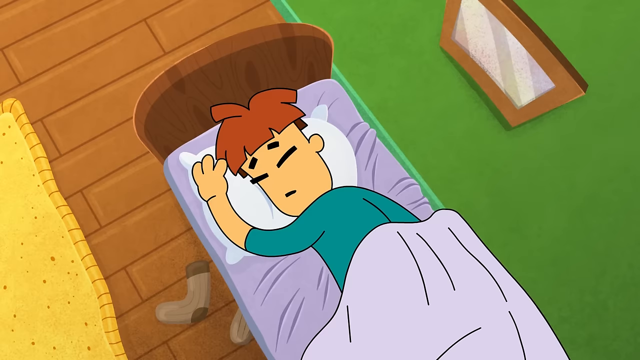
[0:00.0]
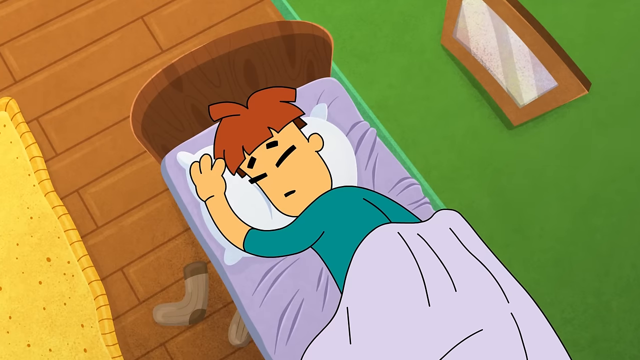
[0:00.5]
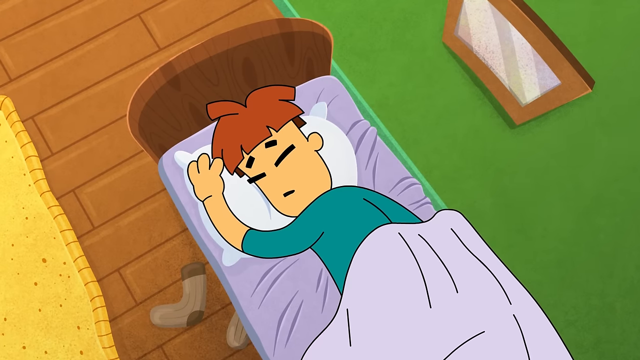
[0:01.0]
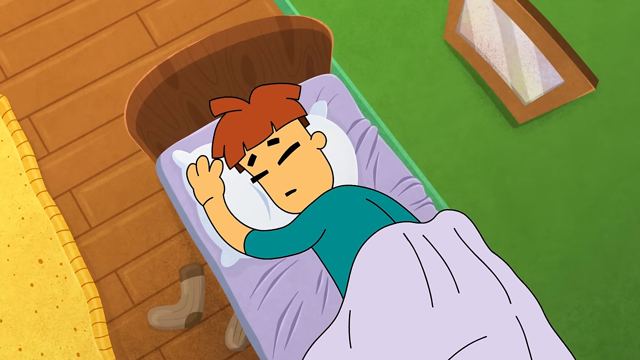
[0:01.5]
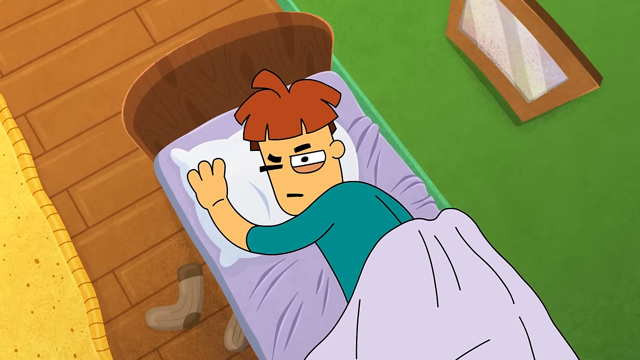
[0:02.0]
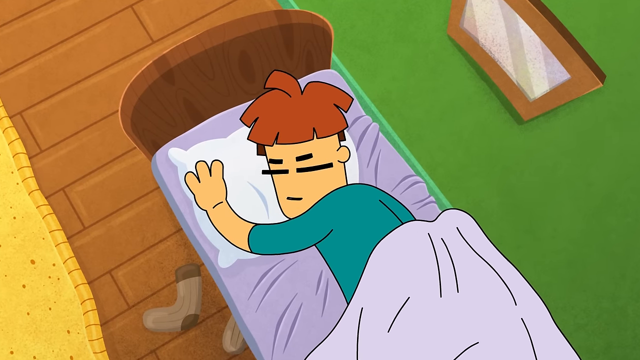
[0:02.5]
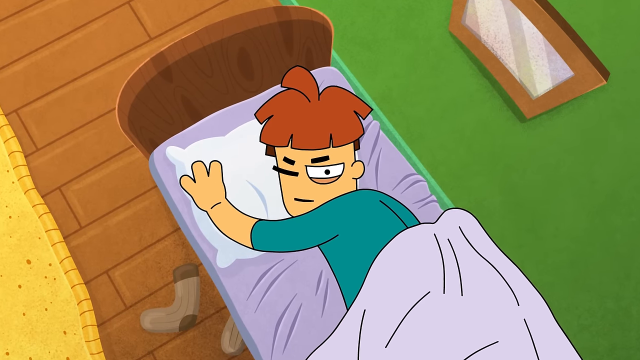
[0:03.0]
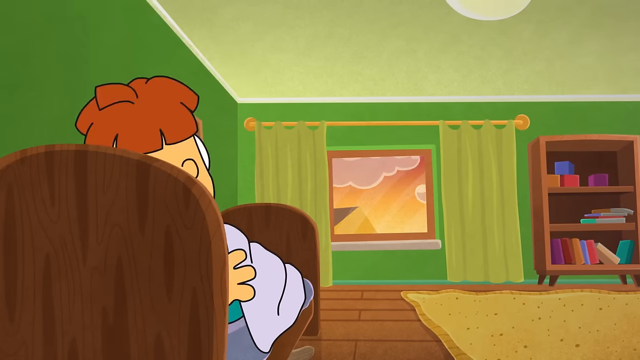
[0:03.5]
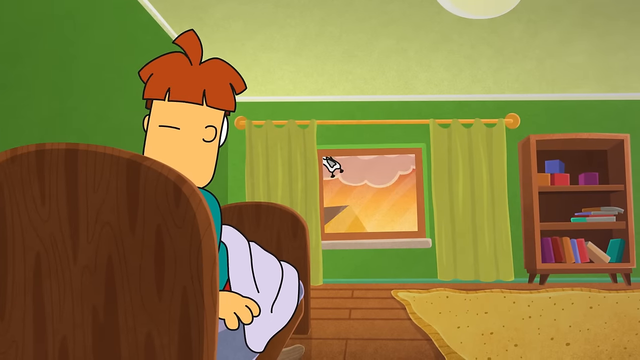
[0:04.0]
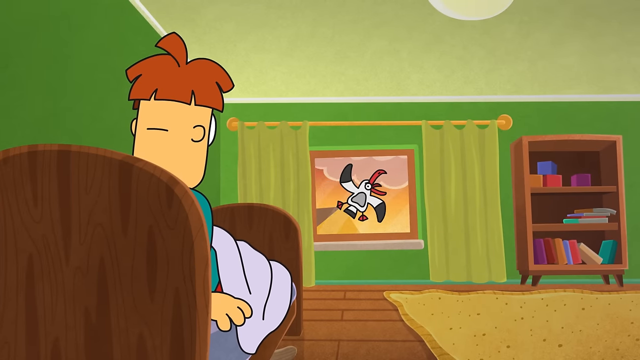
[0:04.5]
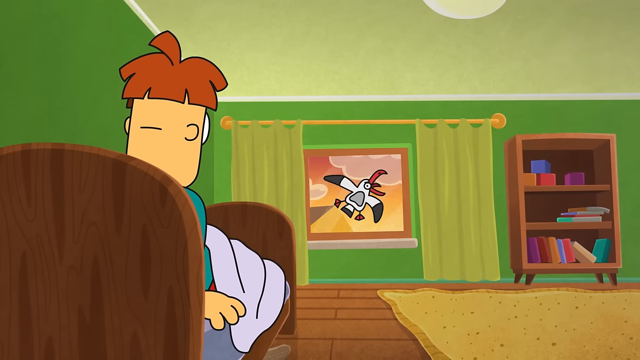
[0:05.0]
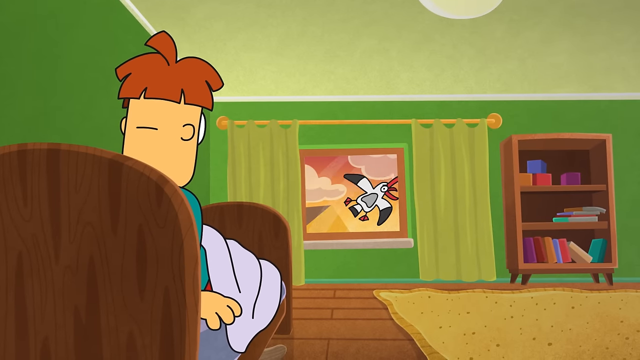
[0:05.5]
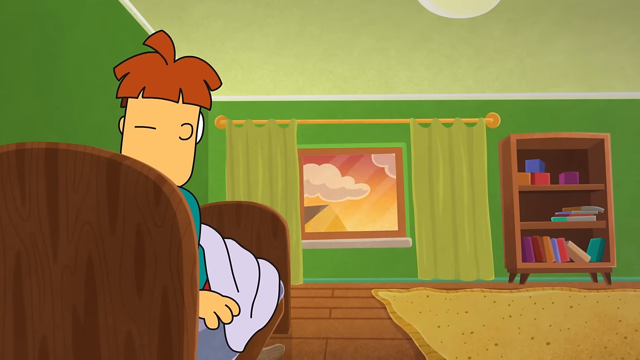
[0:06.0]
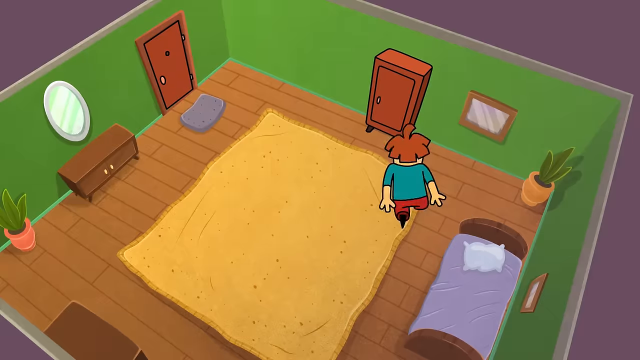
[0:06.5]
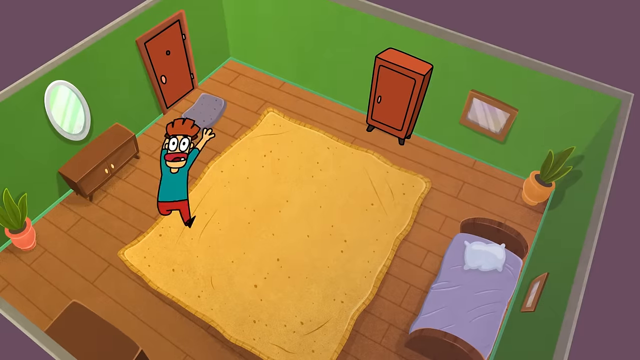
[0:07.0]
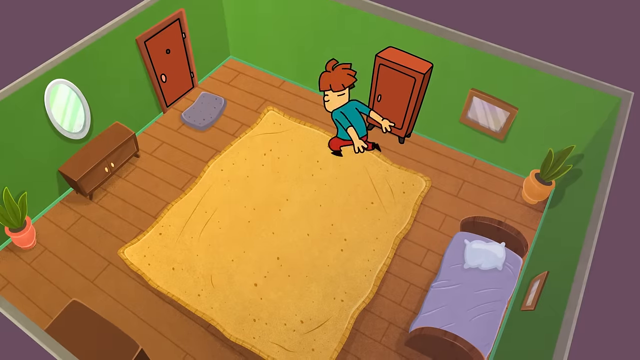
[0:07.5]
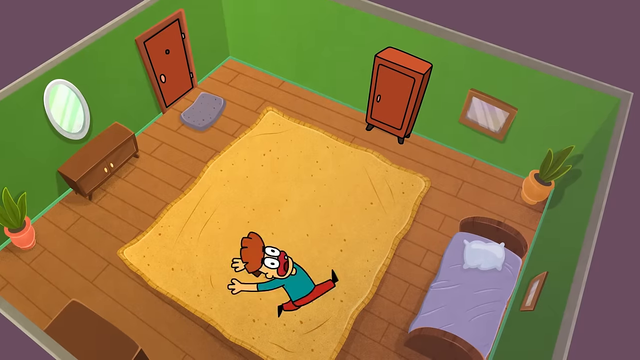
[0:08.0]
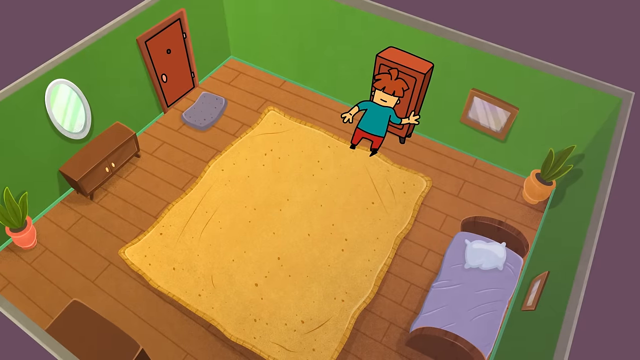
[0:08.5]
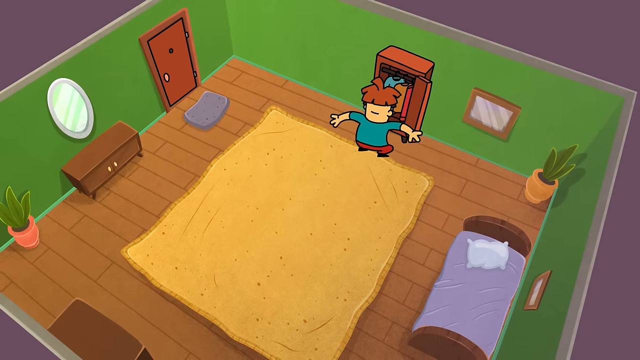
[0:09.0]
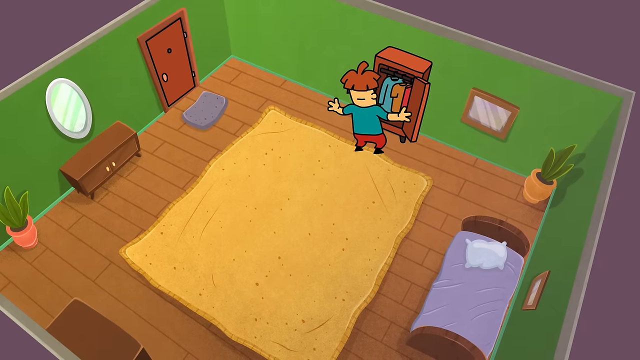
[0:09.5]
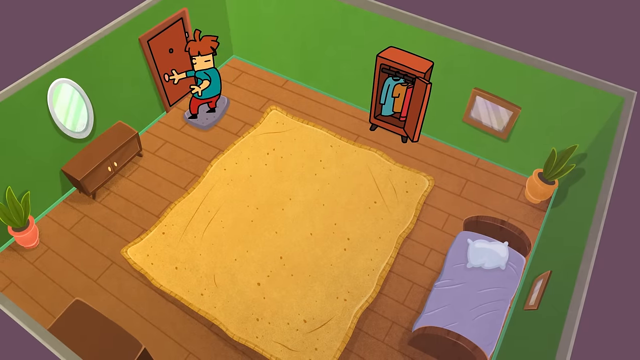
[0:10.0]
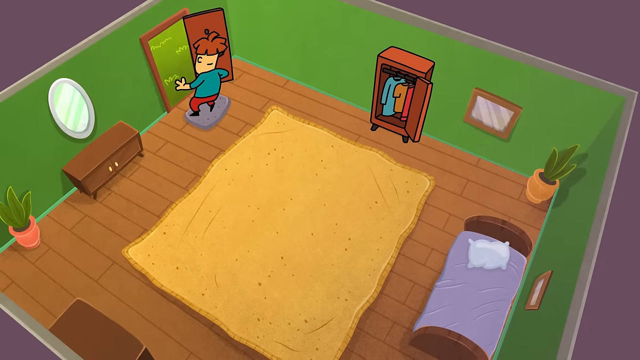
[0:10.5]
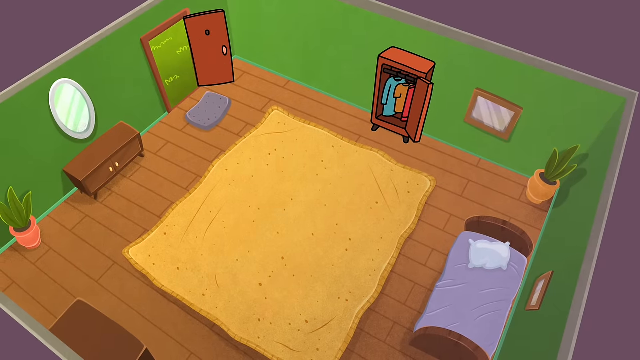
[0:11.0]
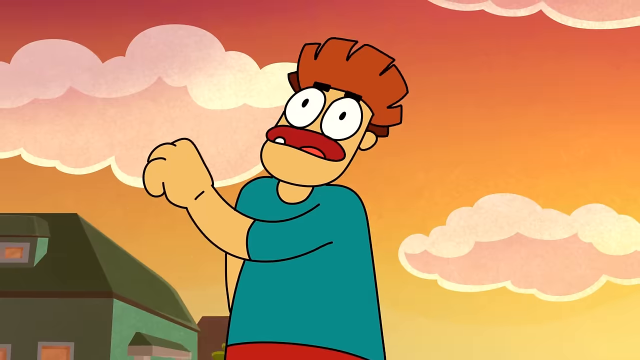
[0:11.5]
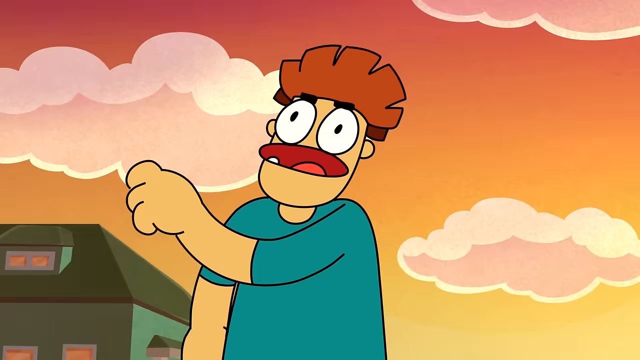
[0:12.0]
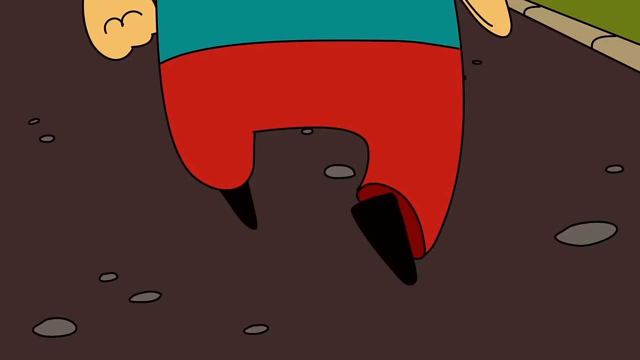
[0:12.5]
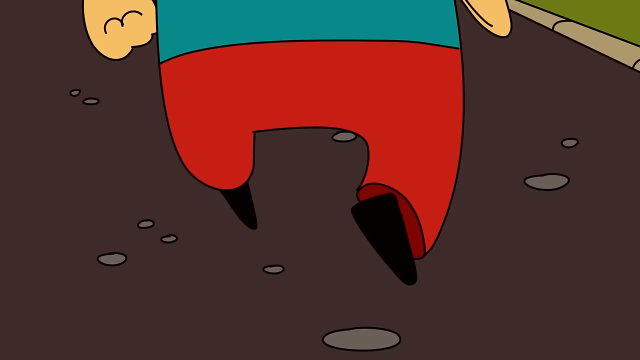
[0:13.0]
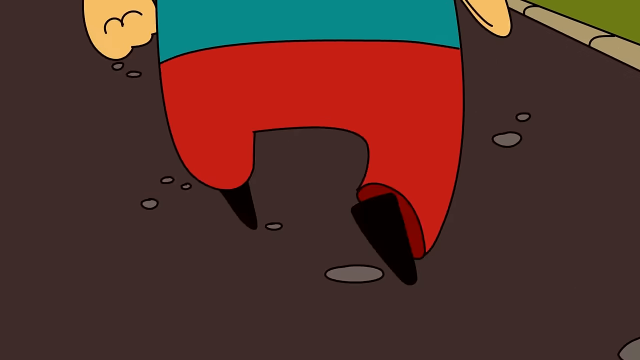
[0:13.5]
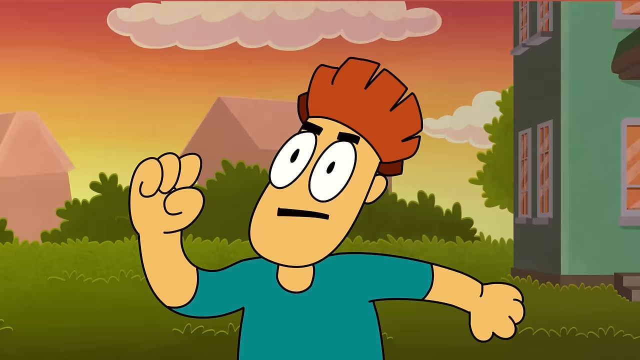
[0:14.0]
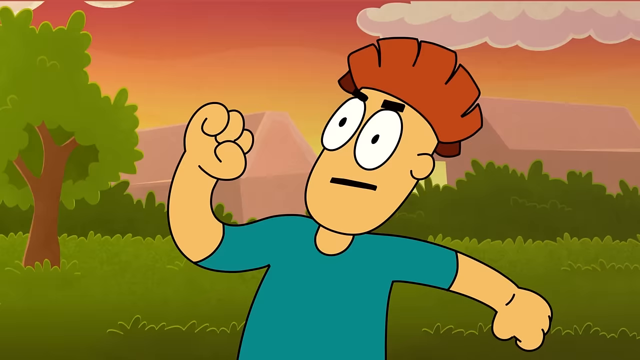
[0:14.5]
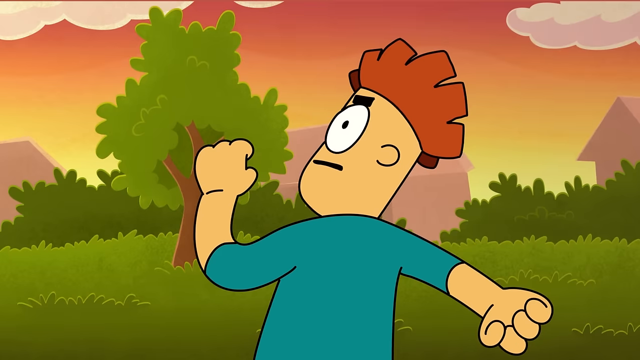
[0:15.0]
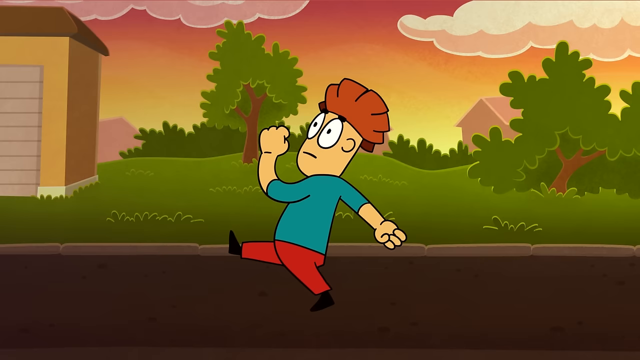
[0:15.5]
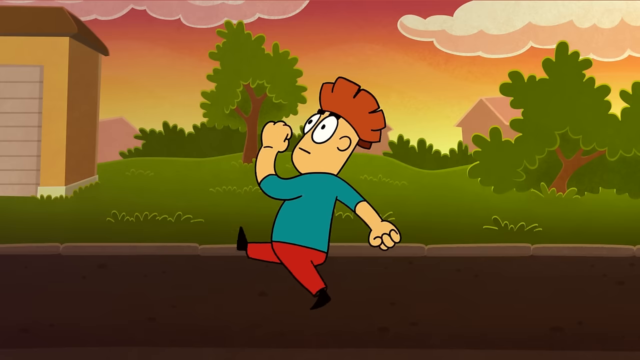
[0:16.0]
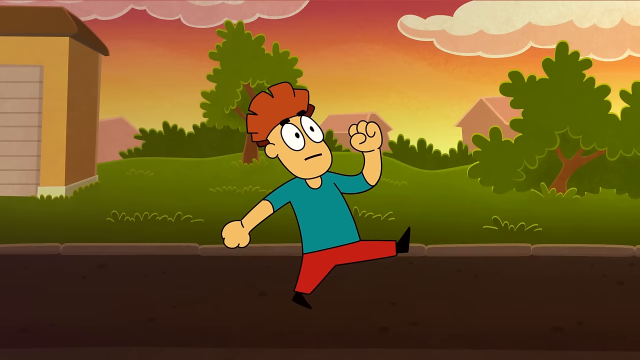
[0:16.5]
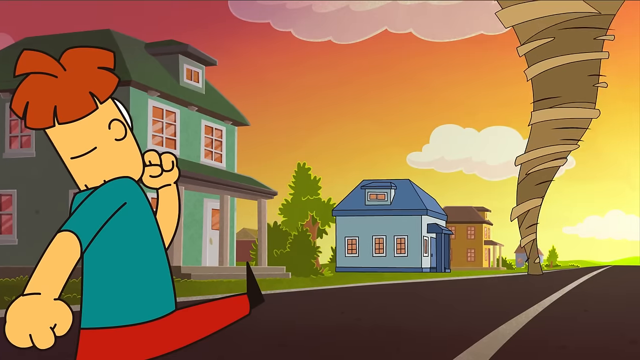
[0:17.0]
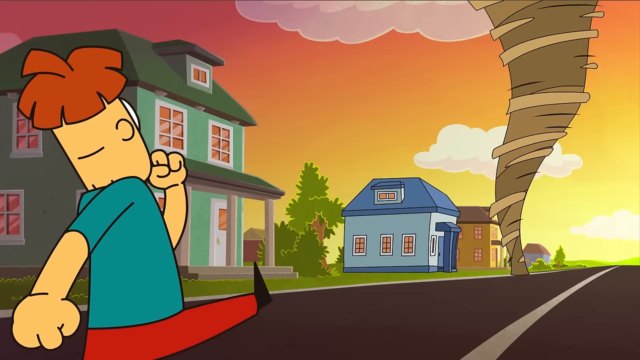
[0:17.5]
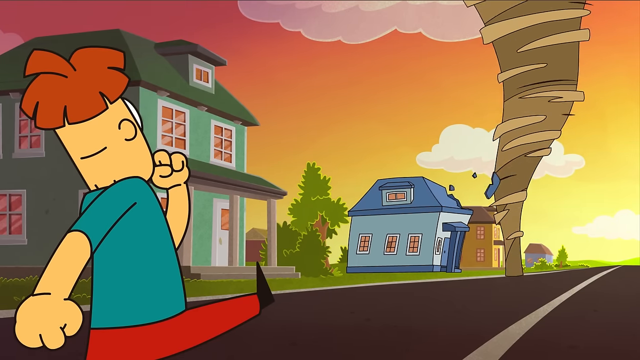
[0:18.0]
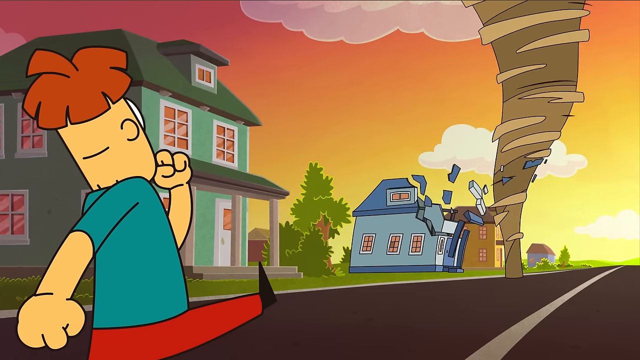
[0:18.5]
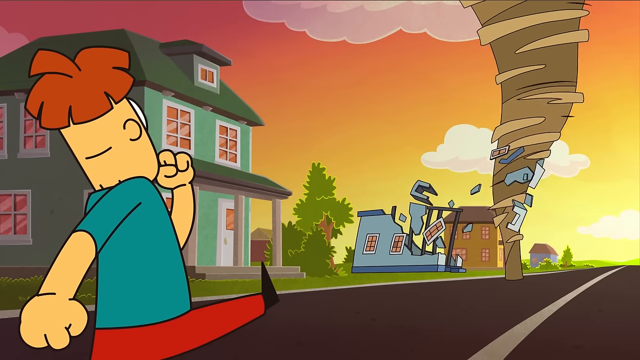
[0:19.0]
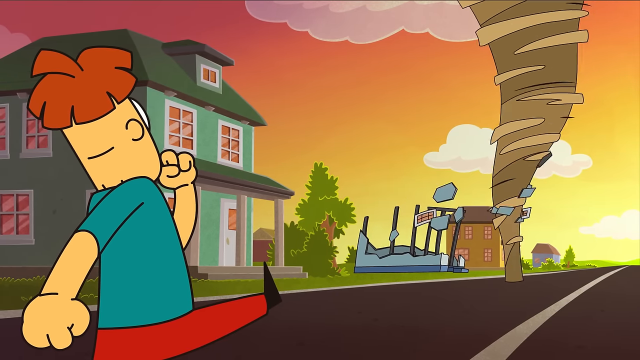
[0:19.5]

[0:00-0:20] The video appears to show the bedroom of a cartoon character. A bed is in the center of the frame, with a dark brown headboard, purplish sheets and a white pillow, and a cartoonish character with brown hair in a bowl cut lies on it, apparently asleep. A mirror is in the top right corner of the screen against a green wall. The floor looks like it is made of wood panels, and a yellowish rug is in the bottom left corner of the screen. One brown sock is on the floor to the left of the bed. The character wakes up, opens their left eye about halfway and looks around while blinking, then raises up and sits up straight in bed. They look out the bedroom window, where a white and gray bird with an orange beak appears outside the window, waving at the character. The character gets out of bed and runs around in a circle in the room, runs to the armoire and looks at the clothes inside, then opens the door to the outside, where grass is visible.